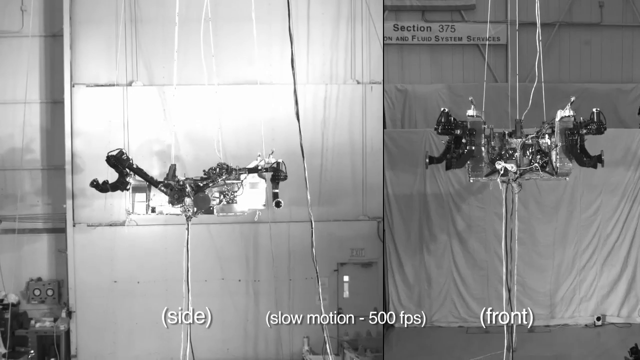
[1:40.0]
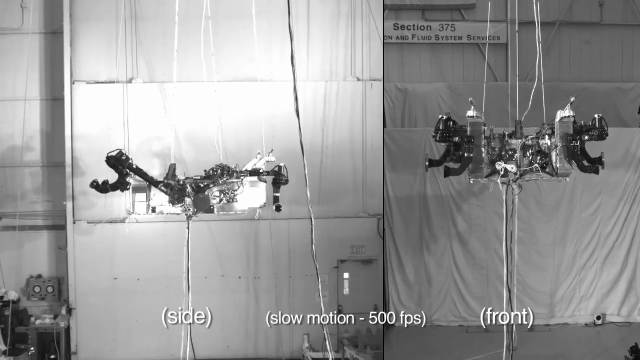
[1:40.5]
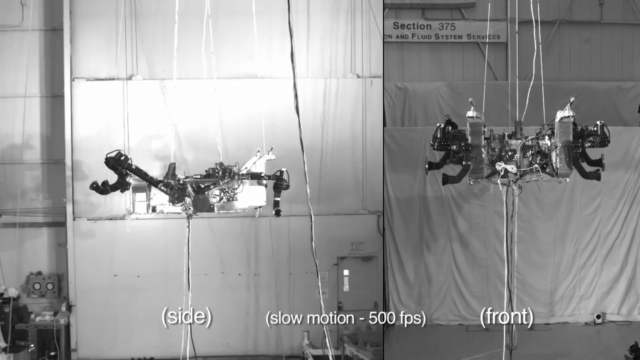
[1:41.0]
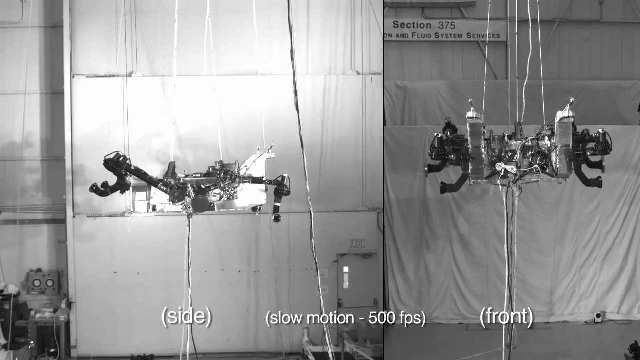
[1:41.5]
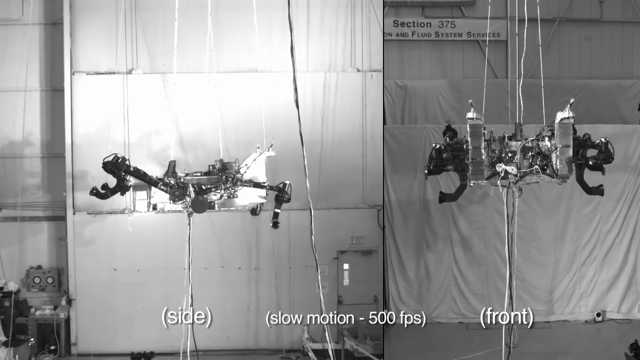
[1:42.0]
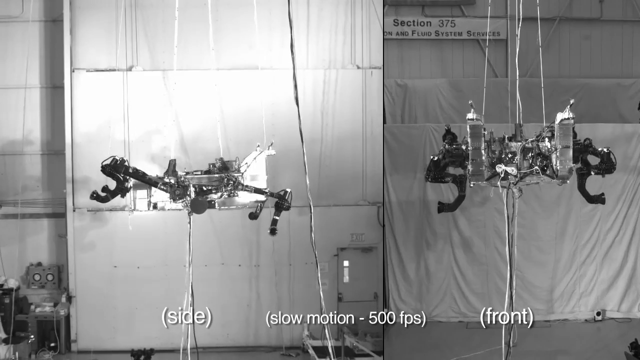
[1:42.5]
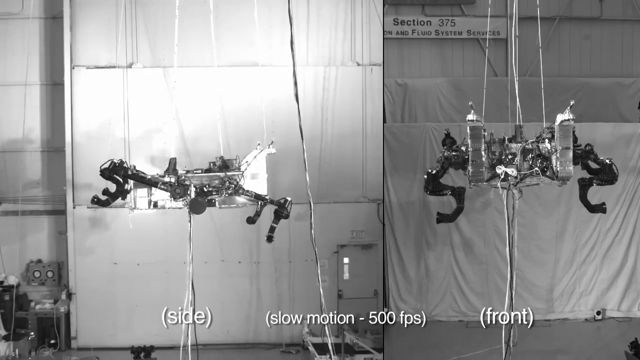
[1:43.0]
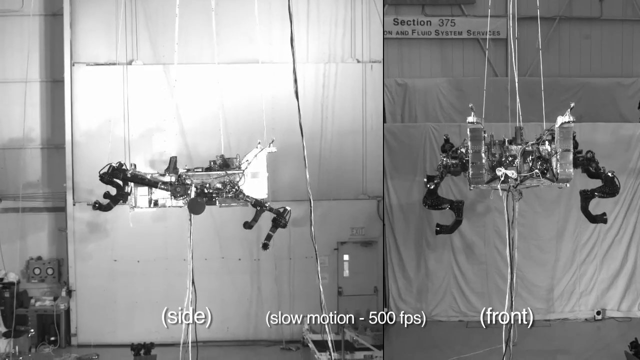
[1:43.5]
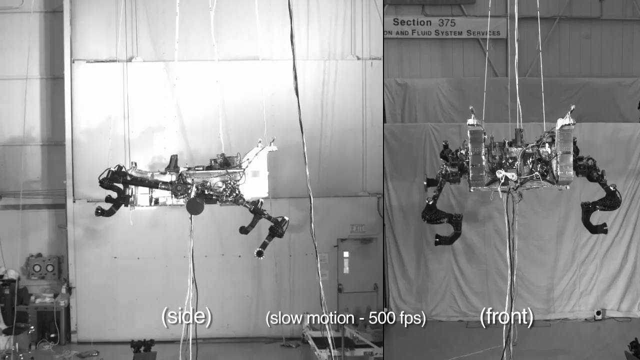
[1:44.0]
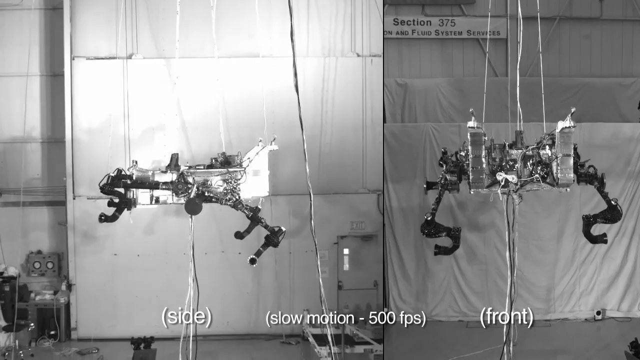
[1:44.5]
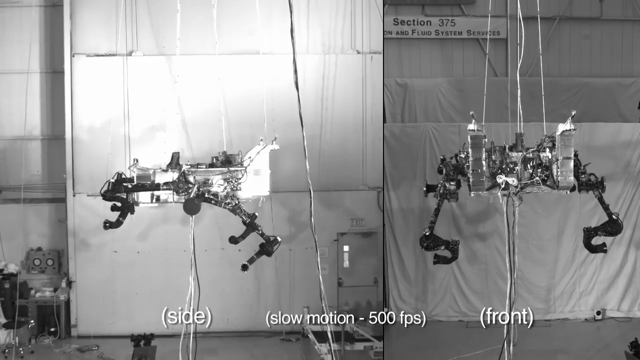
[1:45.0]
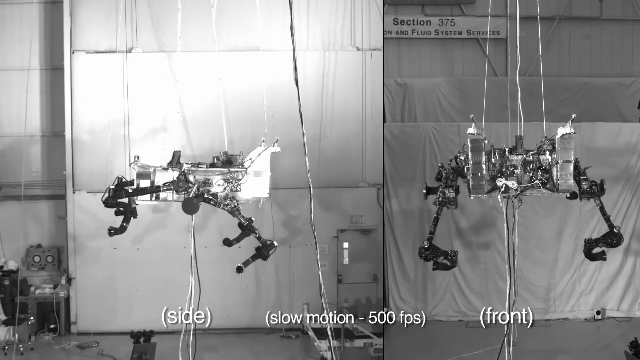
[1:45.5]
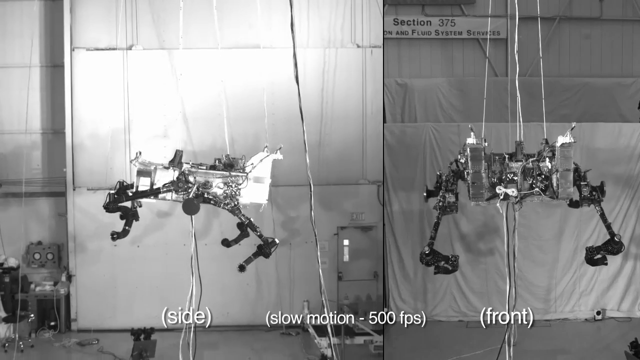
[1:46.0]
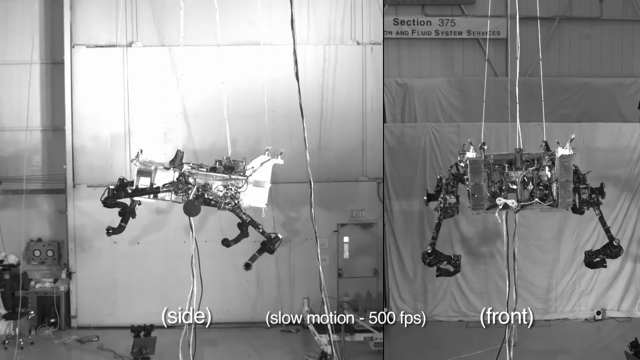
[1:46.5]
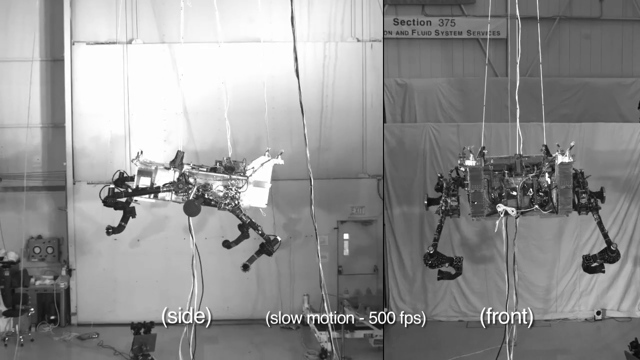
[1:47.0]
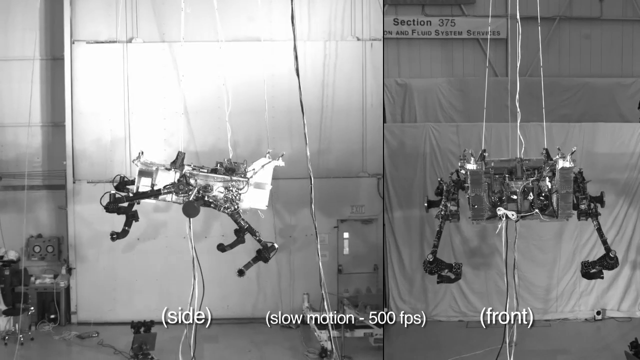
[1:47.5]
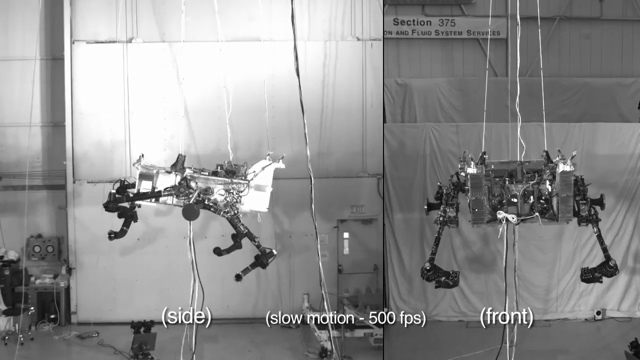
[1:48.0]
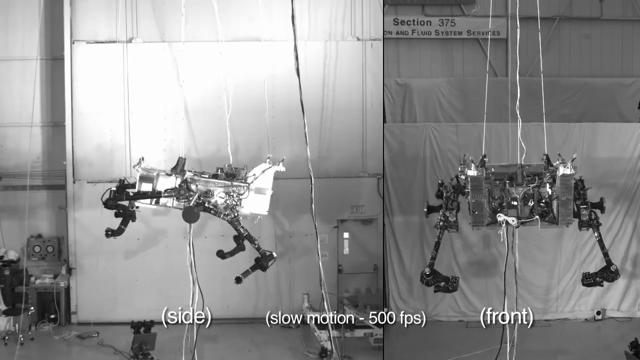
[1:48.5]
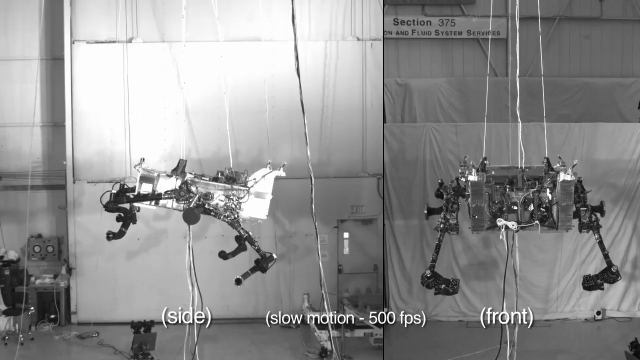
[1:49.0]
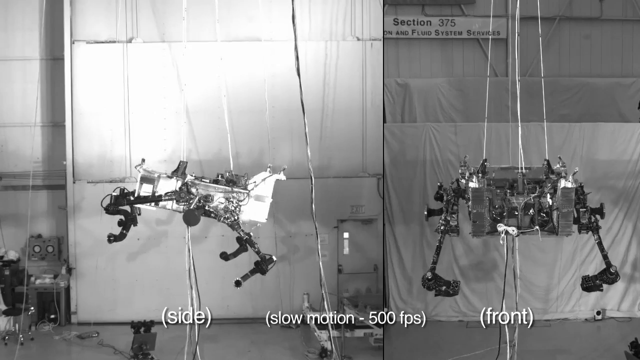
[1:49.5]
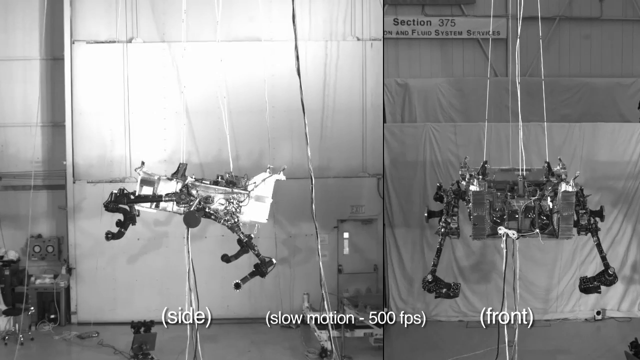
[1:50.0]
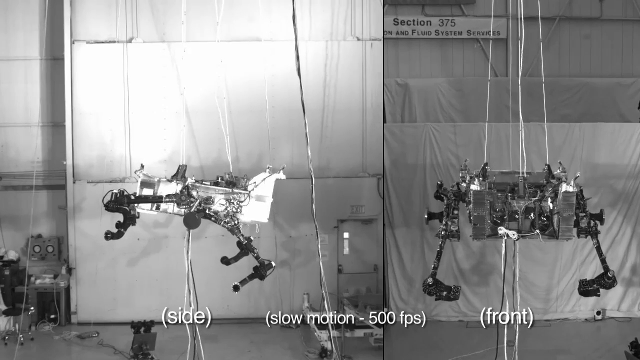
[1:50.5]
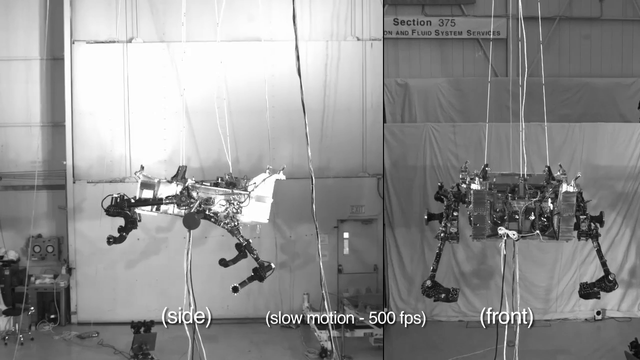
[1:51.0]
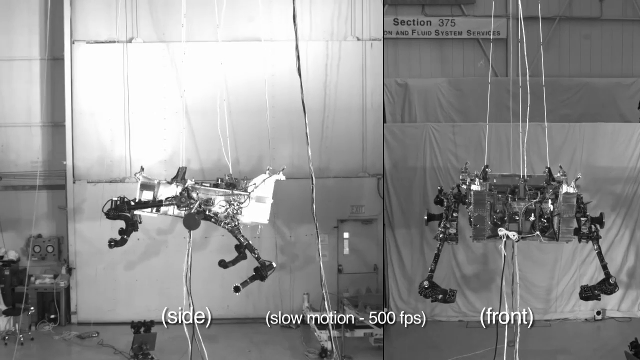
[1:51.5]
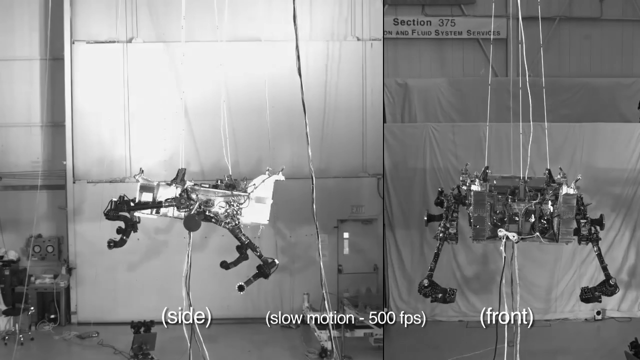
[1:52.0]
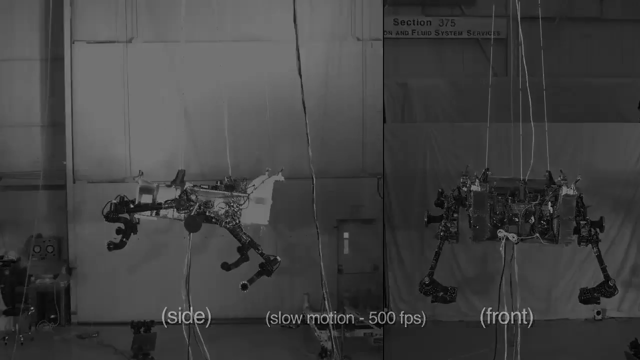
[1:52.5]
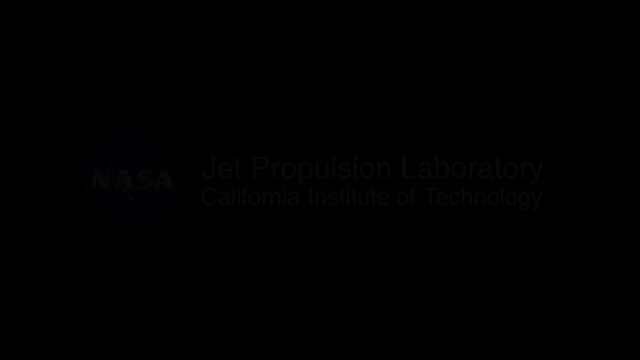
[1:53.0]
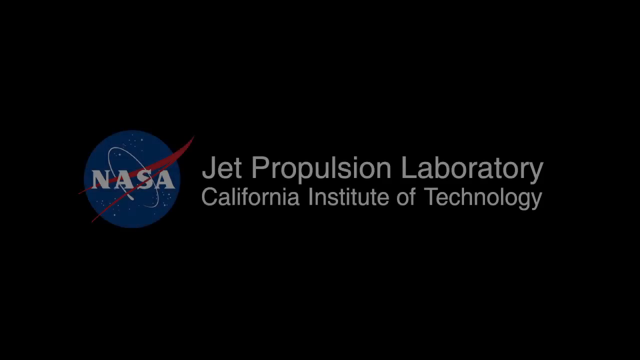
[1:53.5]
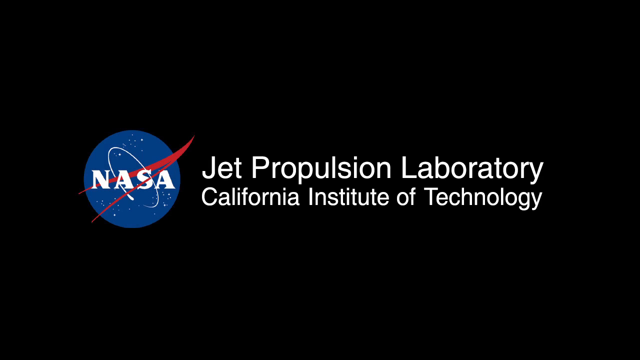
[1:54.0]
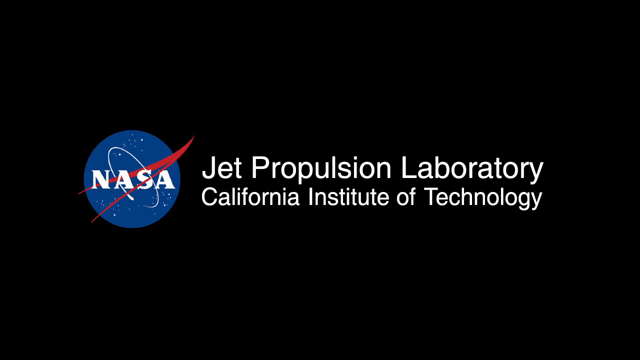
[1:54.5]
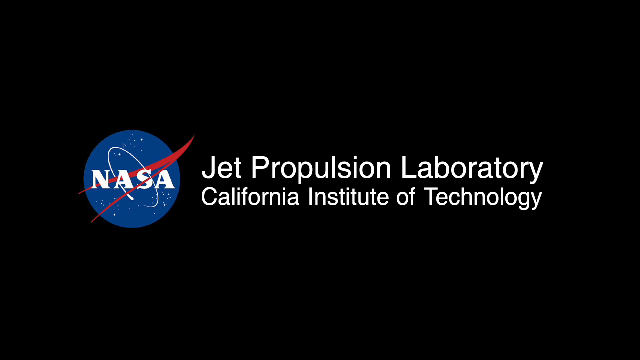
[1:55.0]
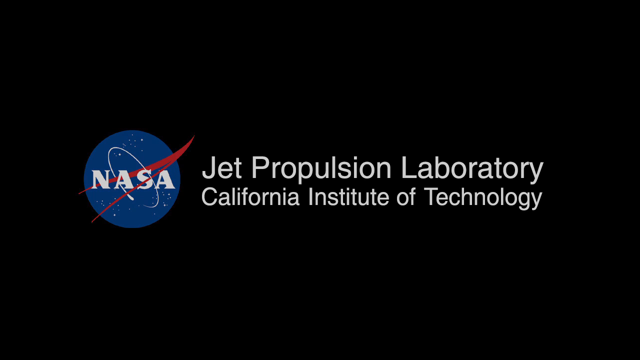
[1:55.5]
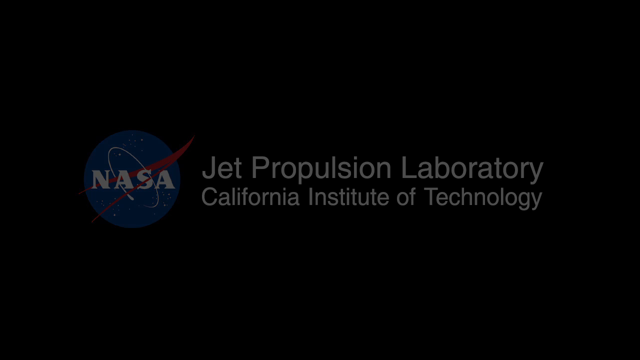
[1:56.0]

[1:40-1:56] The slow-motion separation of the rover continues as it goes down toward the ground, with a side view on the left and a front view on the right at 500 FPS, in black and white. Strings slowly let the rover come down inside a room in a building, and no people are shown. At the end, "Jet Propulsion Laboratory" appears, with NASA on the left side and California Institute of Technology.